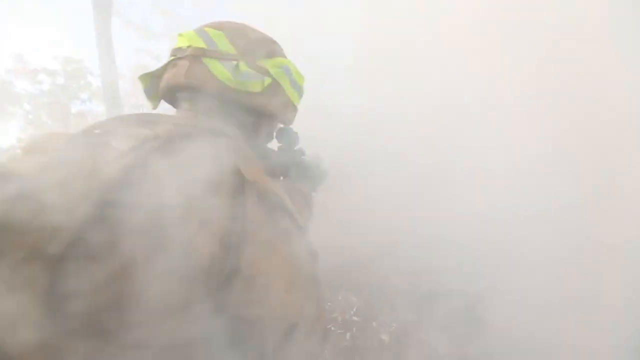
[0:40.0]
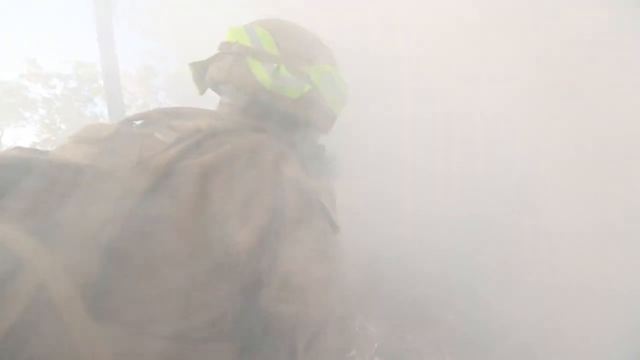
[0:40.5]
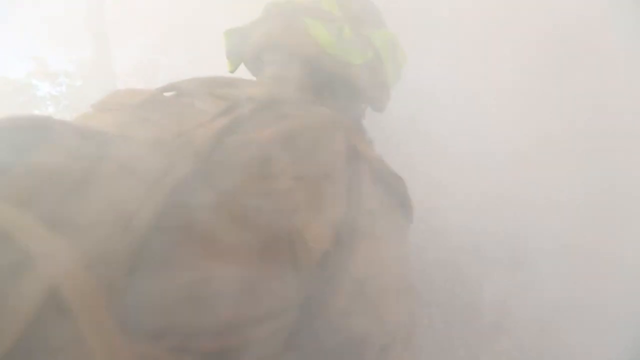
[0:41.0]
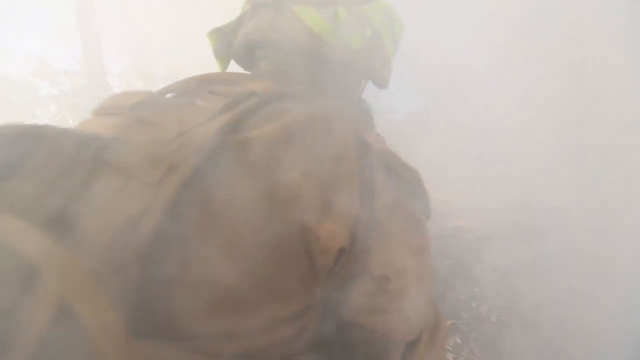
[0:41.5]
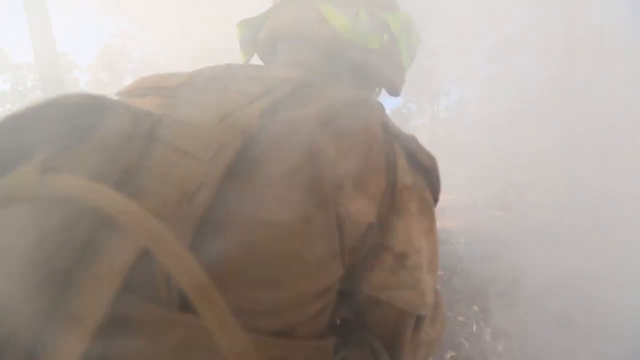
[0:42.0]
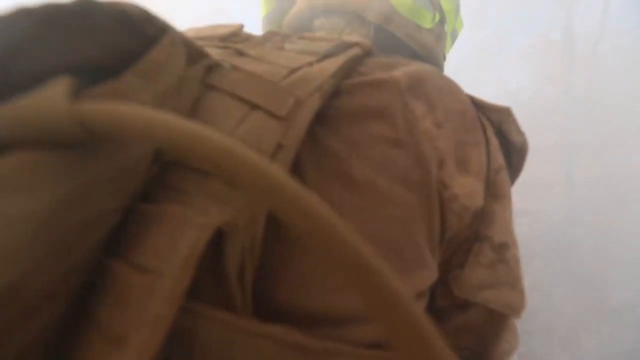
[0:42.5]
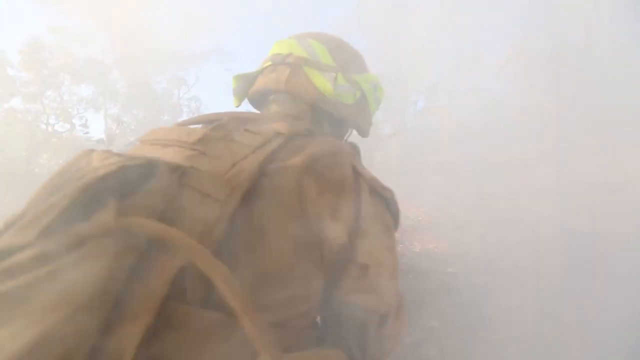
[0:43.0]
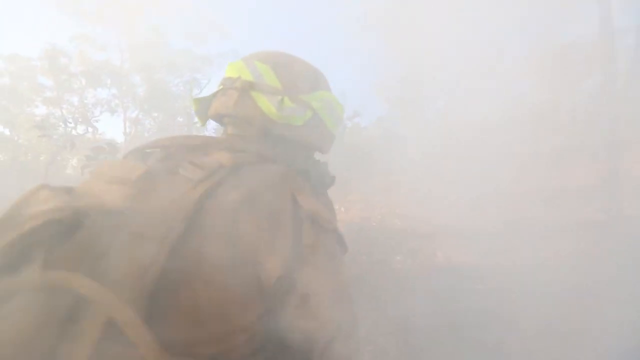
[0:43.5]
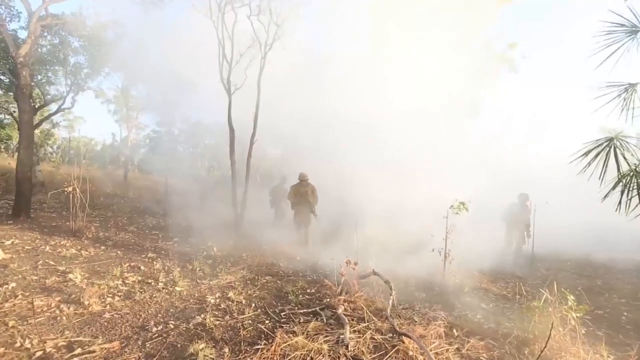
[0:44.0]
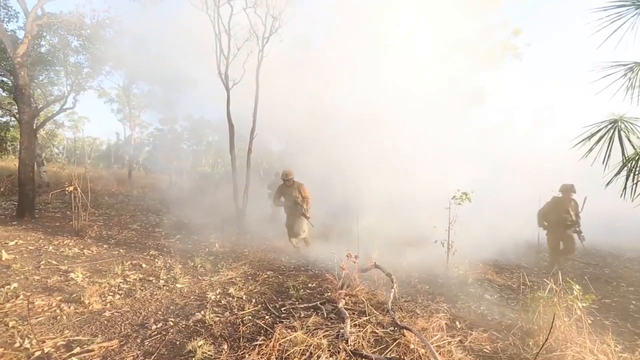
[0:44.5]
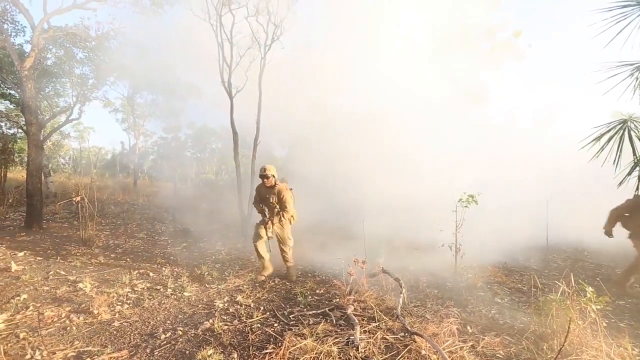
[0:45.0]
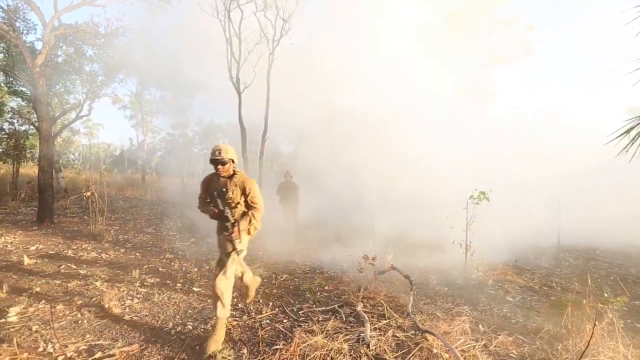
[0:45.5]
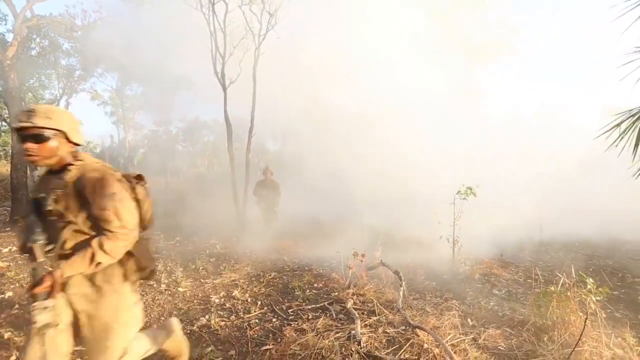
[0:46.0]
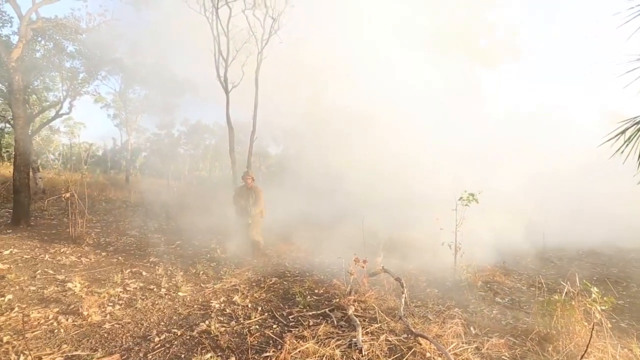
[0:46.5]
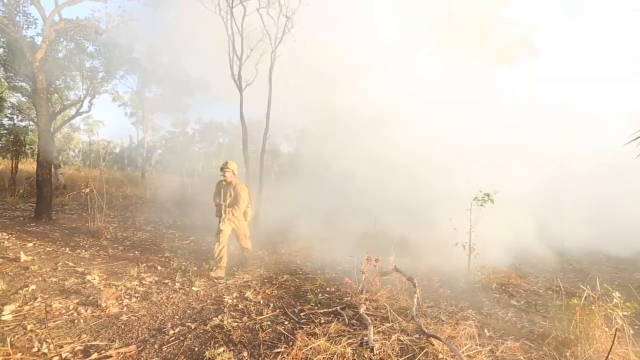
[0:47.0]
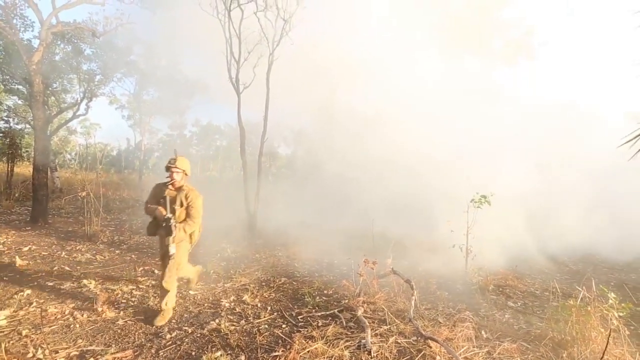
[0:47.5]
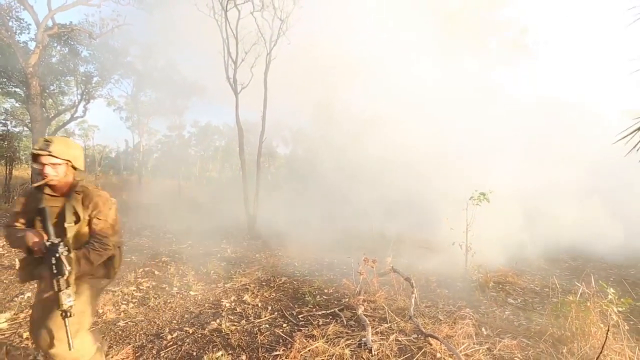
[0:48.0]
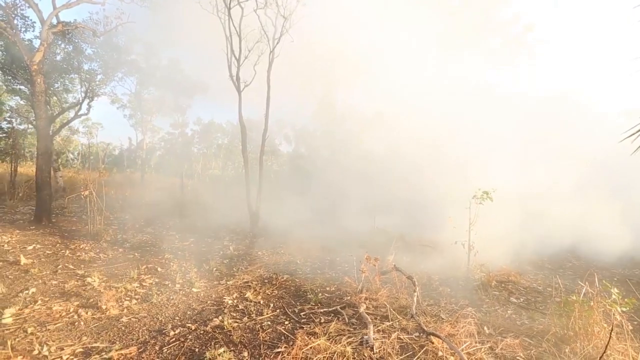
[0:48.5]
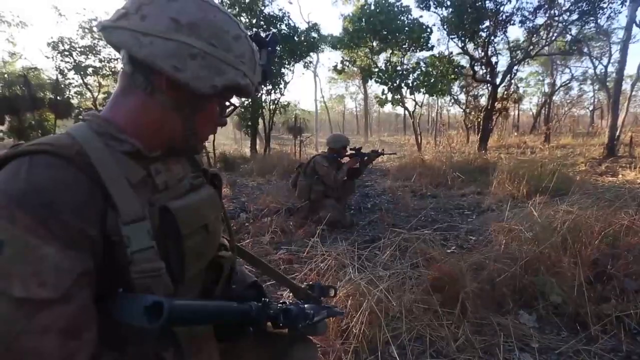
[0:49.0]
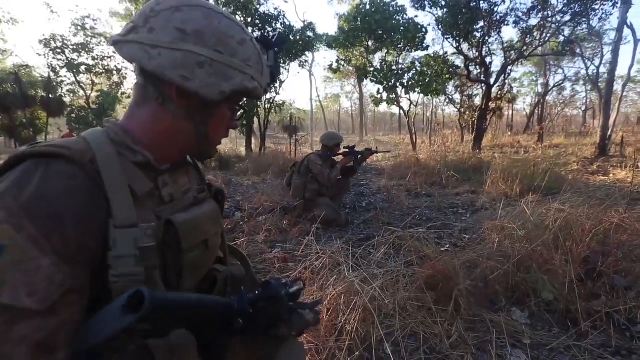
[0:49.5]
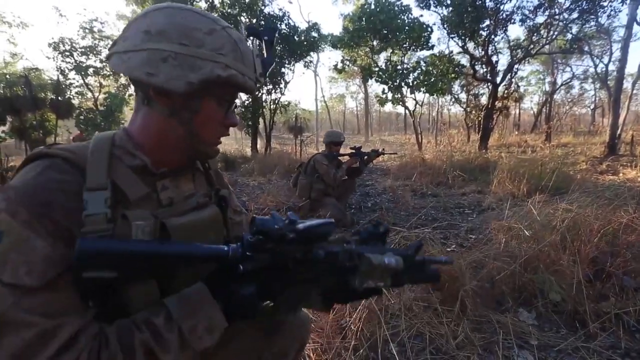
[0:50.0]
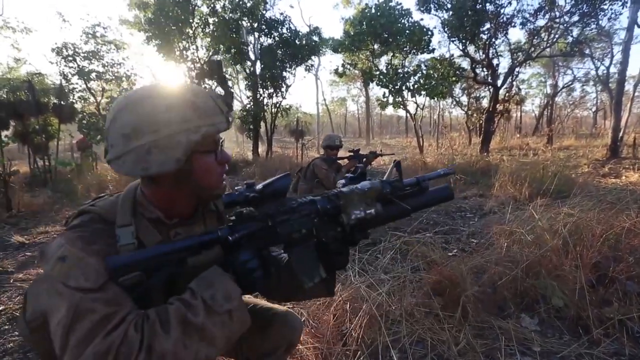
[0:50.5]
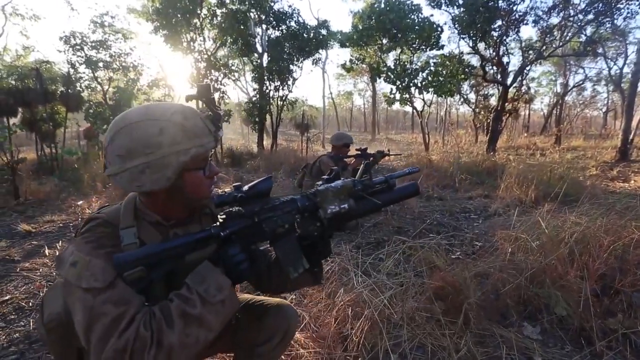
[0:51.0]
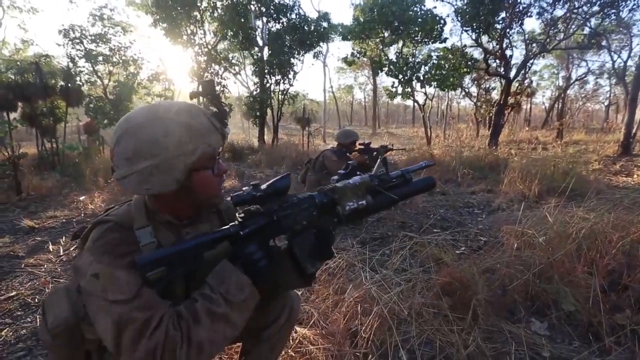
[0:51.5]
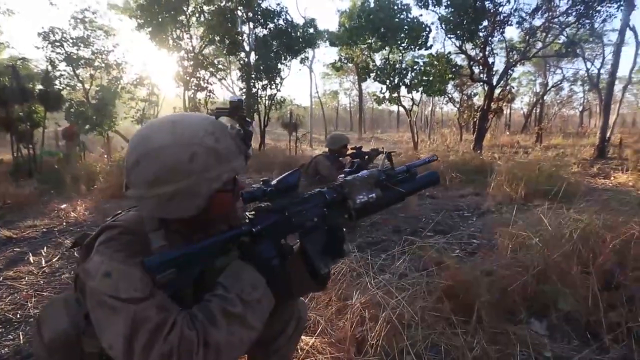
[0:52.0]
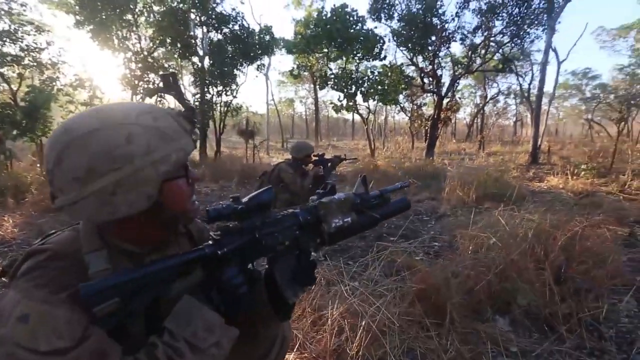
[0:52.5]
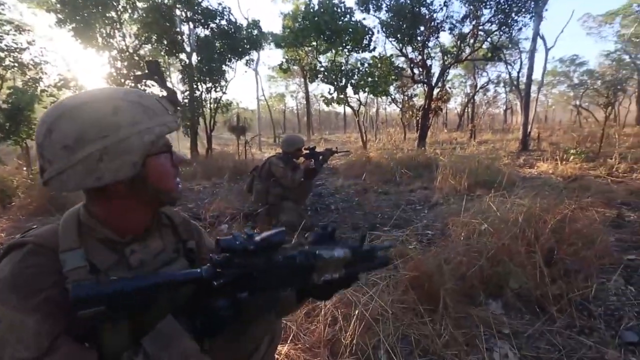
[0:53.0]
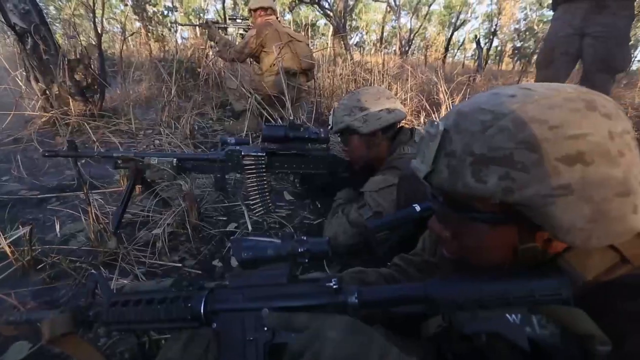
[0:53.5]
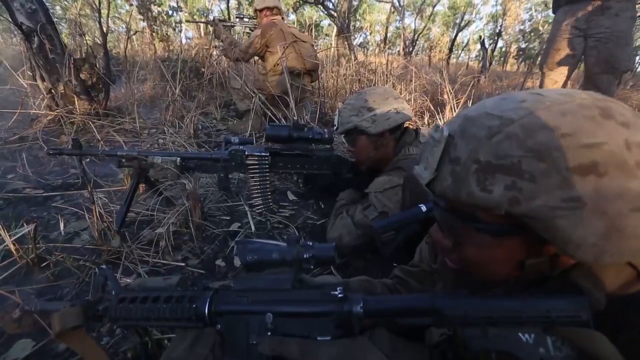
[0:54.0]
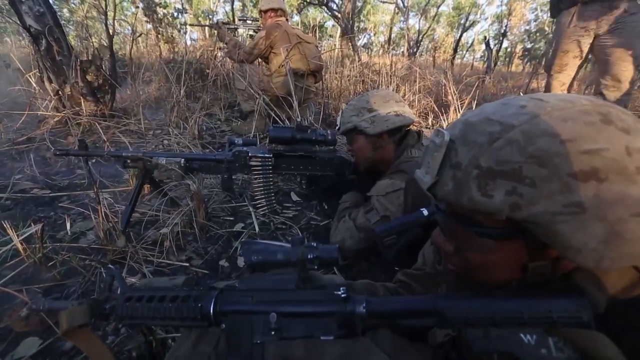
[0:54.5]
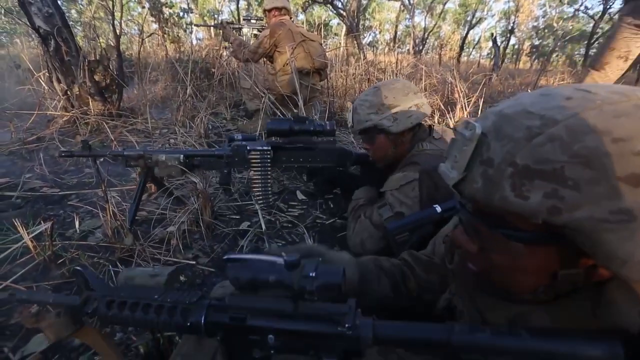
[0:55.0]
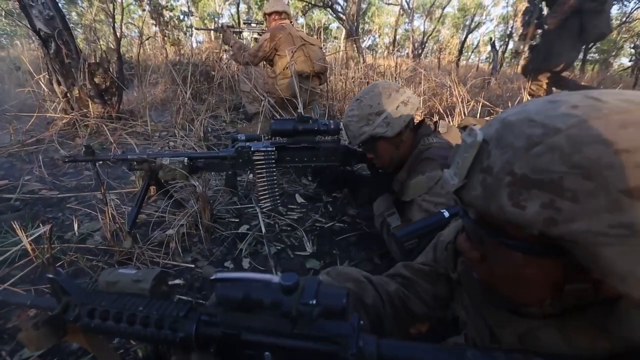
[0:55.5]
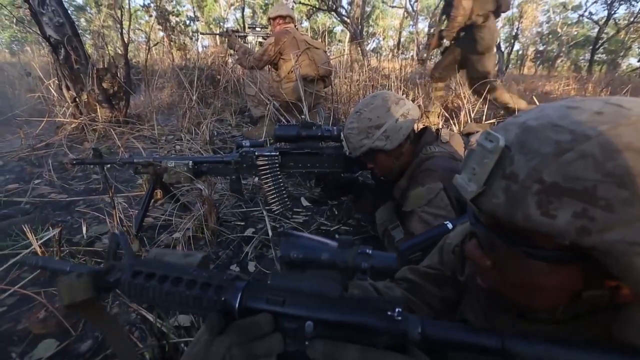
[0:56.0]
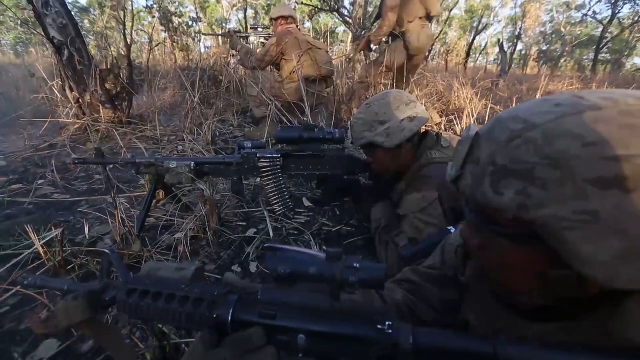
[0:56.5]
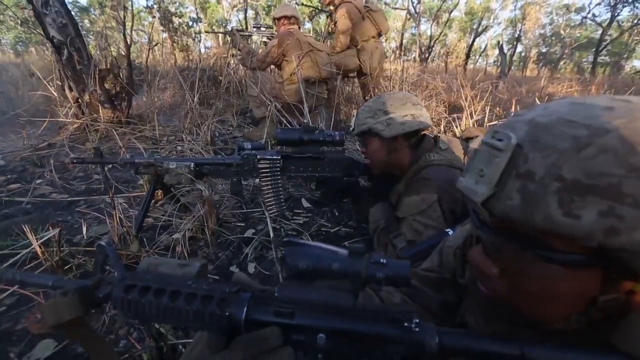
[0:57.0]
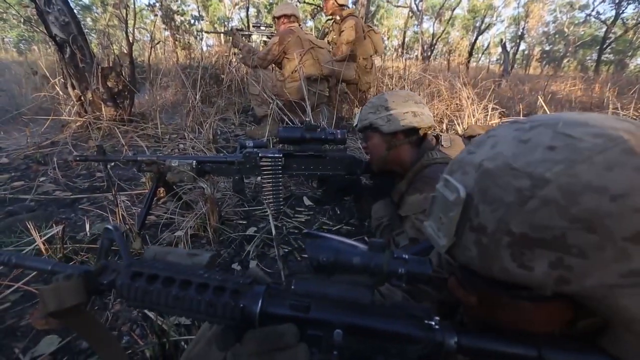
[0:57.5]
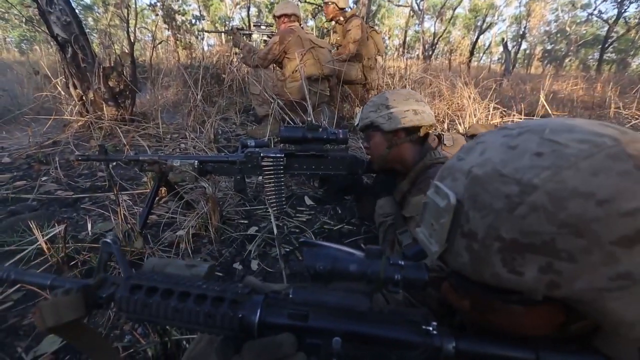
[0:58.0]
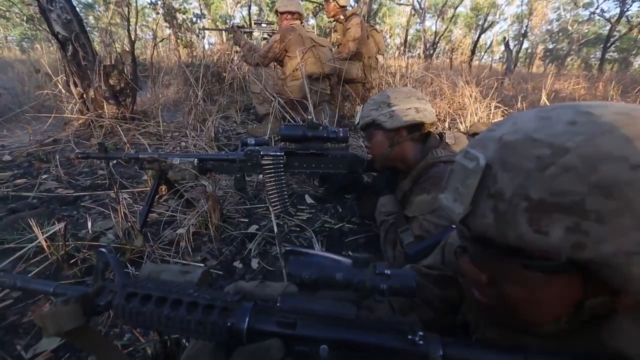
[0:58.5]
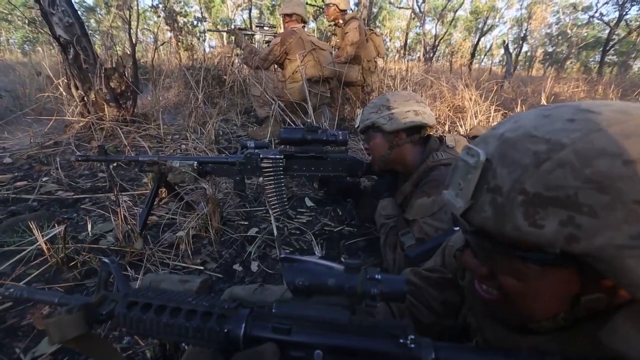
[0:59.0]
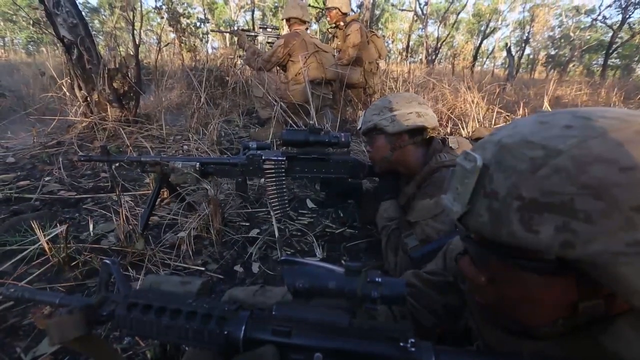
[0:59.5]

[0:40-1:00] A person walks into a lot of smoke; they wear a helmet with a yellow bandana-like cloth around it and run toward the camera. Three men run toward the camera amid a lot of smoke. Men lie down and look through their weapons, which rest firmly on the ground with a stand toward the front. The man in the middle, with the weapon on the stand, has bullets coming out of the left side of his weapon as he looks down its barrel. On his left, another man lying on the ground has his weapon pointed where all the weapons are pointing; no stands are visible on his weapon, and those weapons look like they have no stands. The weapons have sights to look through for aiming. Multiple men face the direction the two men lying down are looking. Men run toward the screen, three distinct men running toward the camera. Men kneel as if hiding behind a small hill, pull their guns out and cock their weapons.